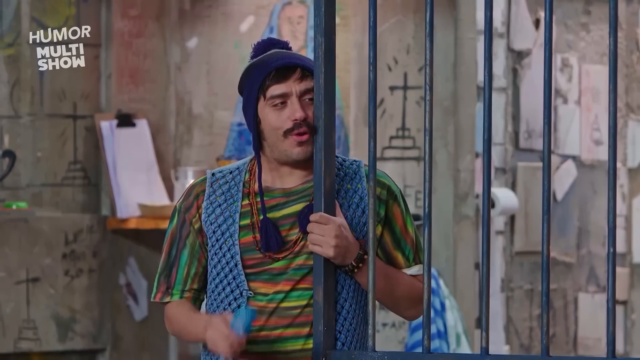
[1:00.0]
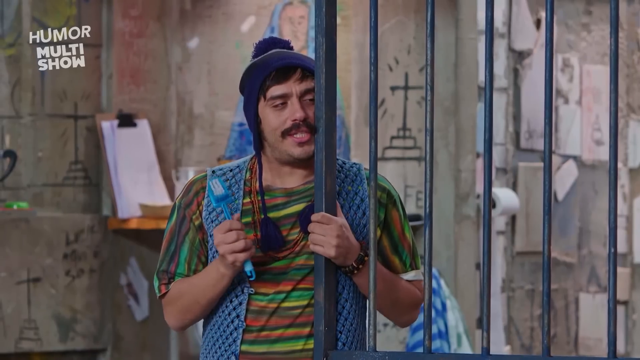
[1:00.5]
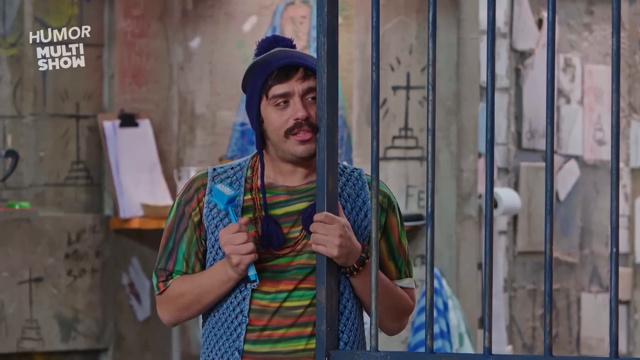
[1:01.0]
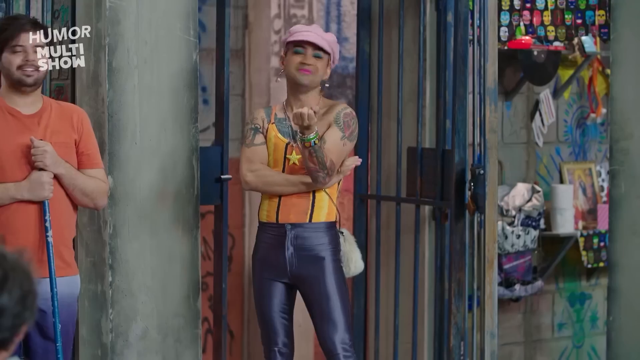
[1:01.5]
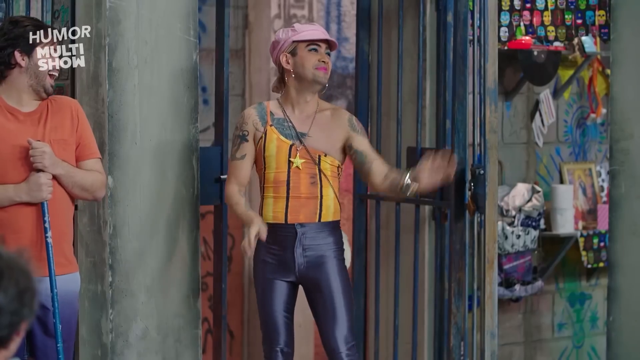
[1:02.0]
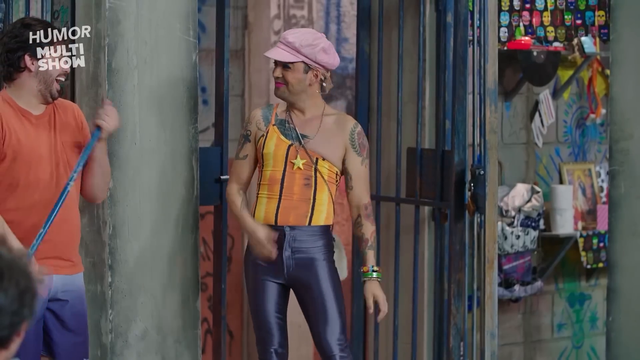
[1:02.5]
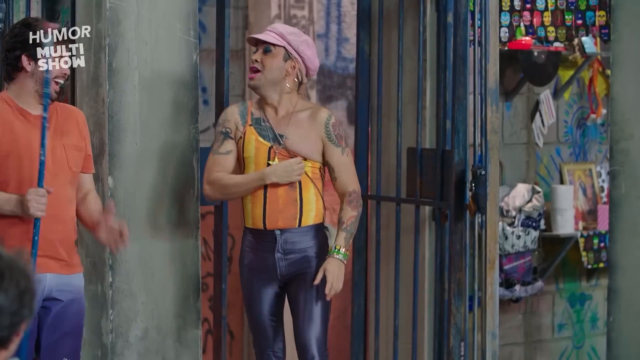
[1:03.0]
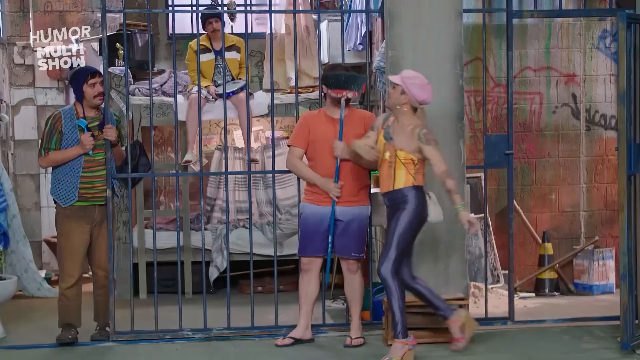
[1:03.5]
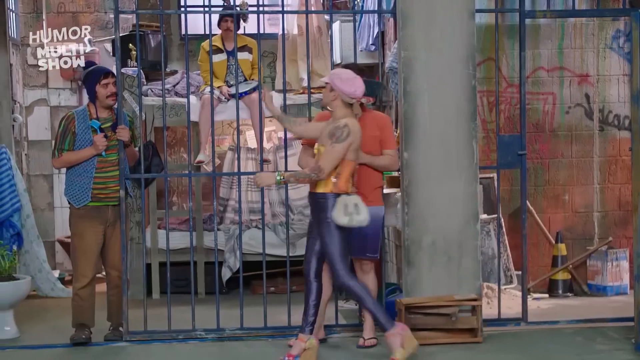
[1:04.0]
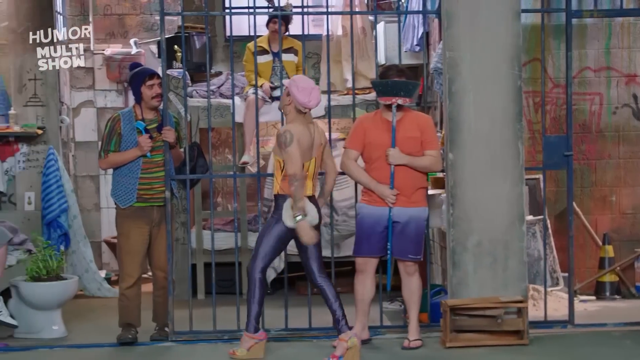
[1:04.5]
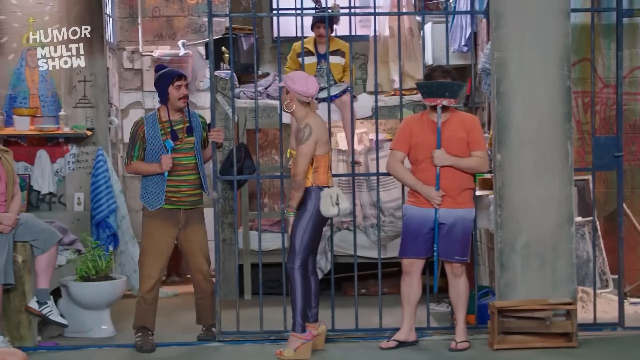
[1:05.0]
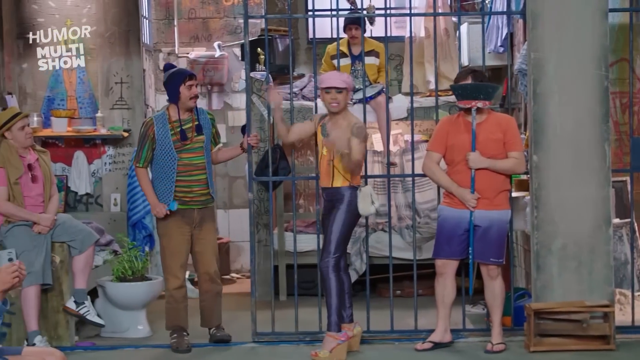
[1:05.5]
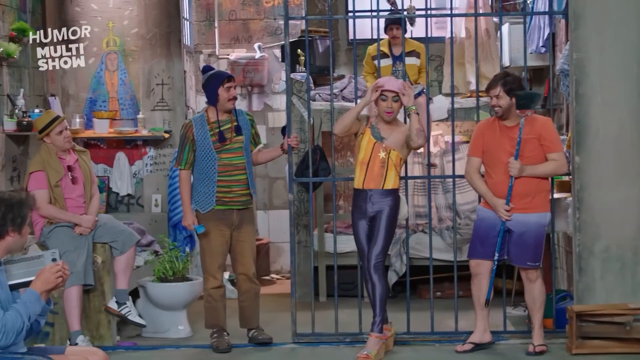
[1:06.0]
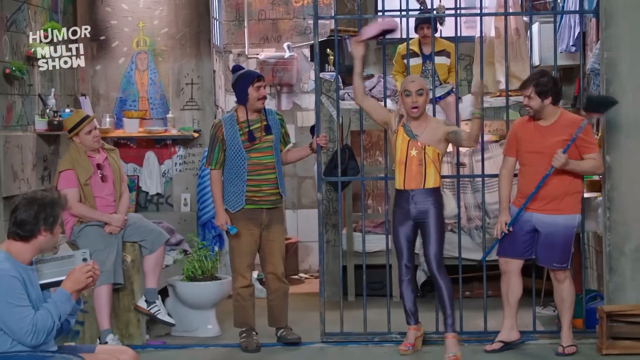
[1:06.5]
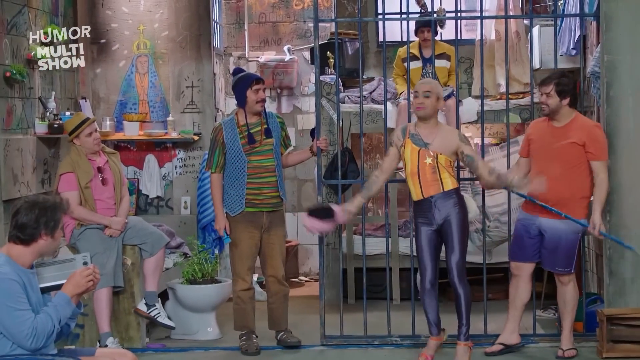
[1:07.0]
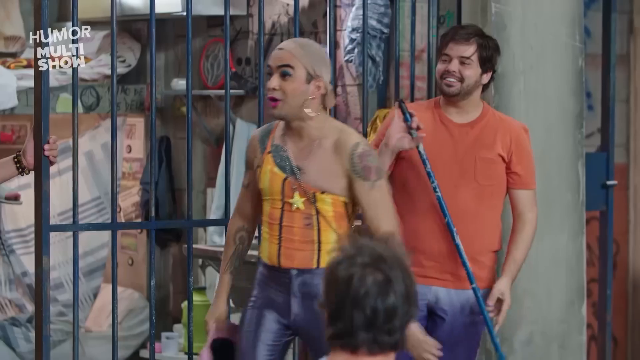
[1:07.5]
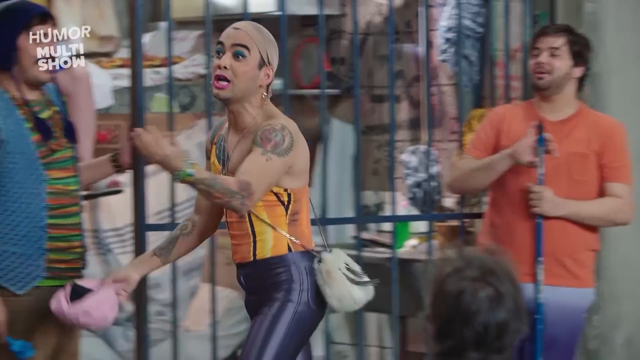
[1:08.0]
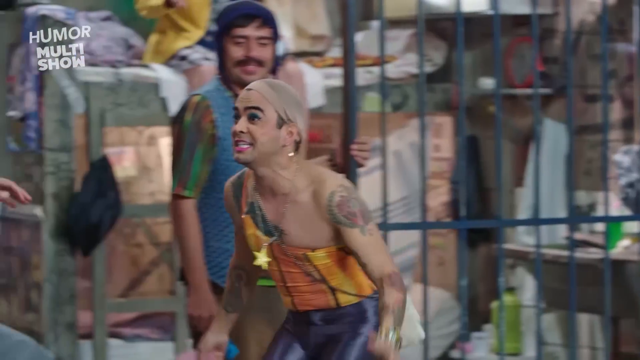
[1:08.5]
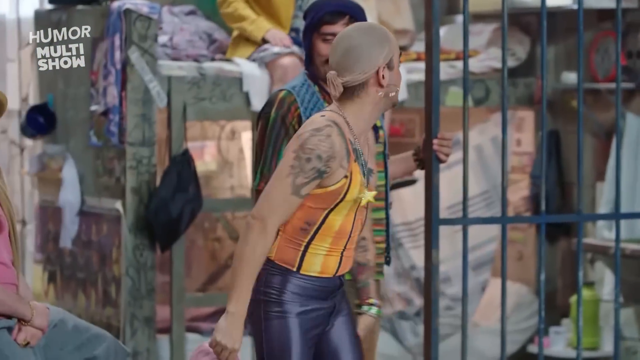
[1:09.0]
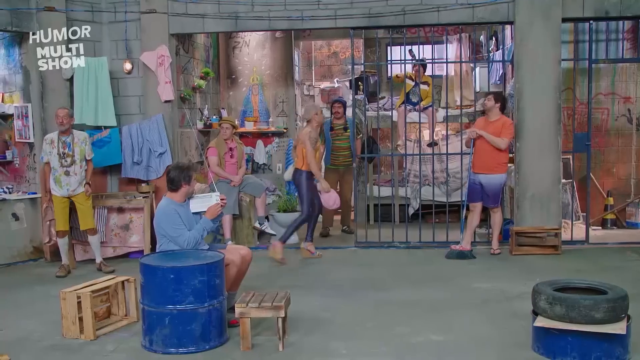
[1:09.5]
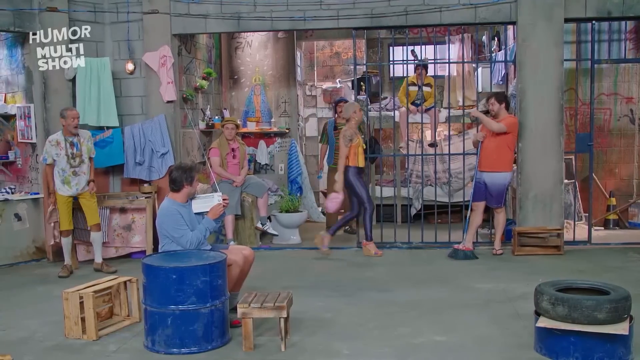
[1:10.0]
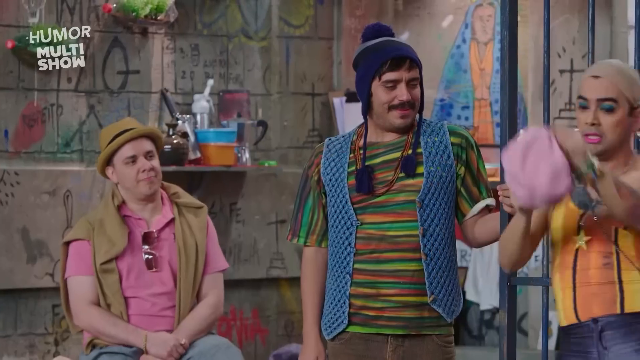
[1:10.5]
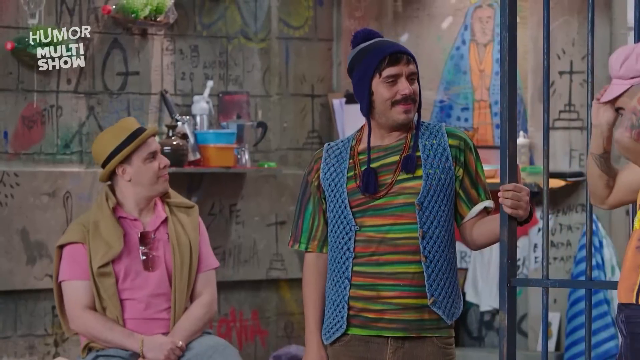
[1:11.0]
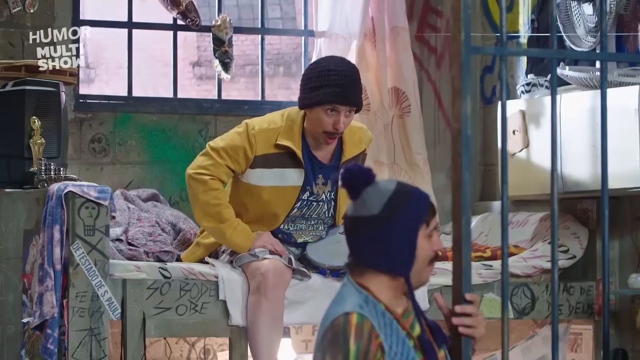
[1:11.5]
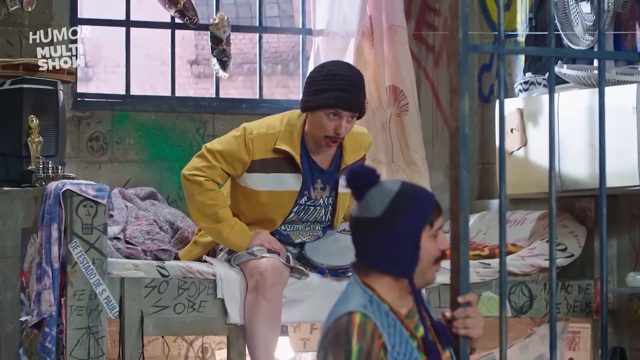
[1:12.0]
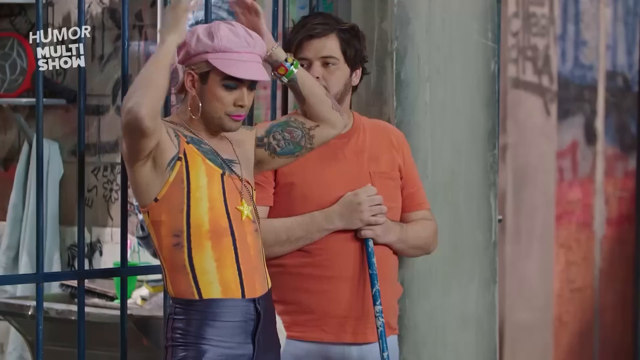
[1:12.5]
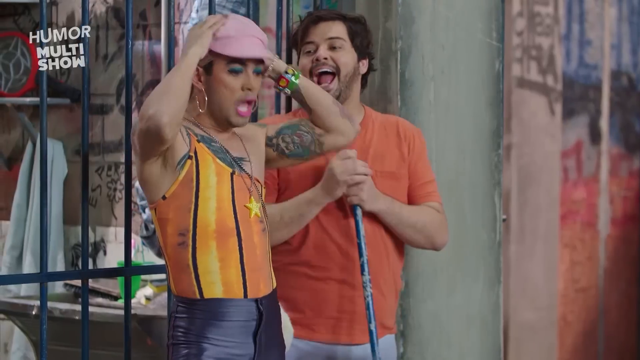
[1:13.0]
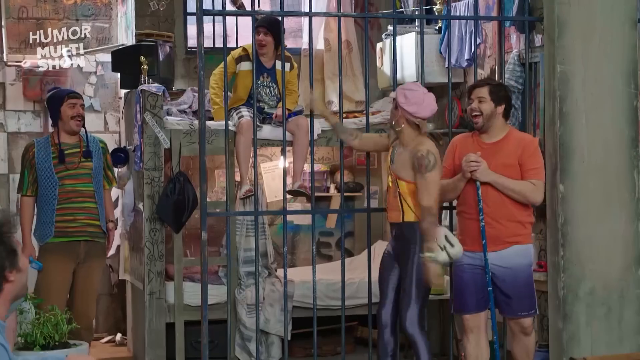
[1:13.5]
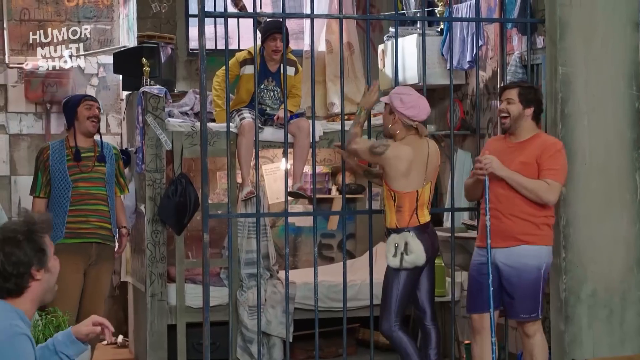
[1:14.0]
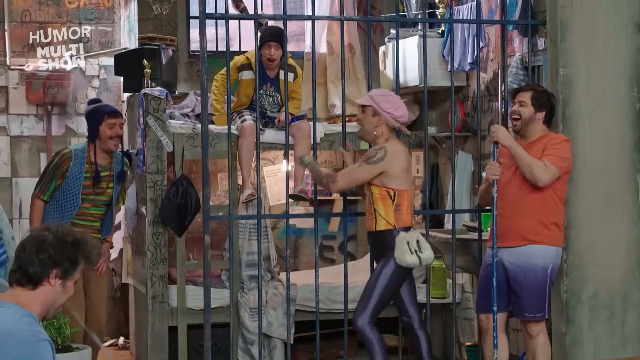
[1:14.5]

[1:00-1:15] In the jail cell, the main character, a transvestite prostitute, takes off her hat and reveals a stocking over her hair. She wears lots of makeup, has lots of tattoos, and wears an orange and yellow tube top with a star on it, gray lycra spandex pants and high heels, and has a white purse. She yells at all the others. The man in the blue vest with the funny hat seems to be flirting with her but also scared of her. She comes at the man in the orange shirt, and he just laughs at her. She then goes after the man in the bed behind the bars, apparently because he made a snide remark; he makes faces at her and she gestures to him as if he shouldn't do that. Everyone is laughing as she shows her stocking-cap head, moving all over the room flailing her arms left and right. The man in the pink shirt with the hat just observes, and the man in the long-sleeved blue shirt just stares at her.